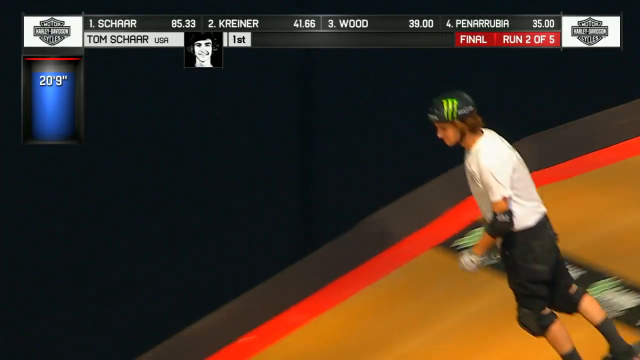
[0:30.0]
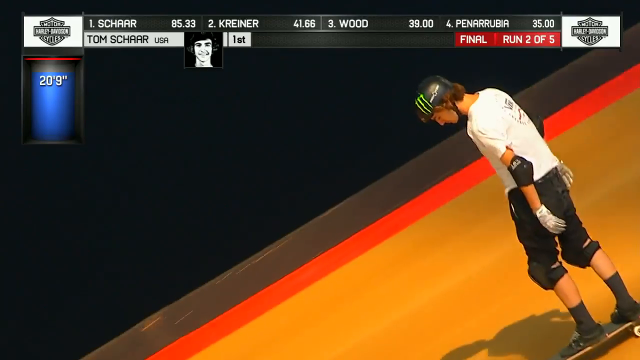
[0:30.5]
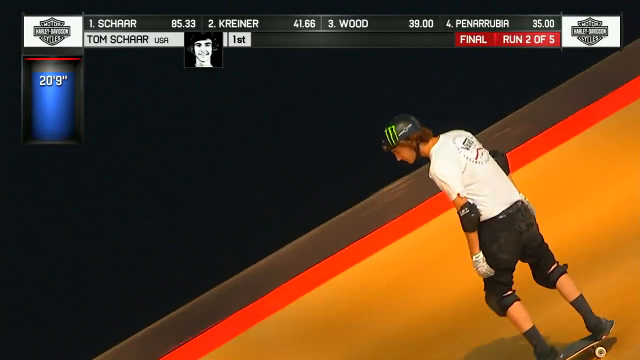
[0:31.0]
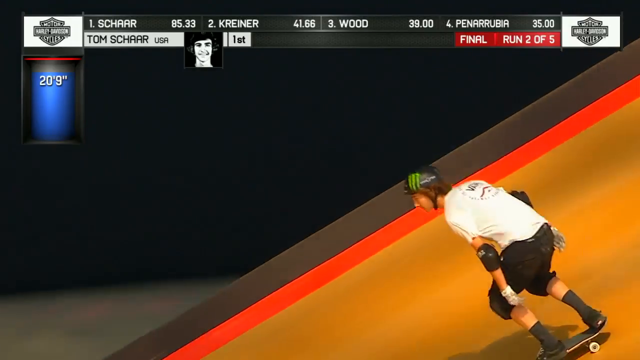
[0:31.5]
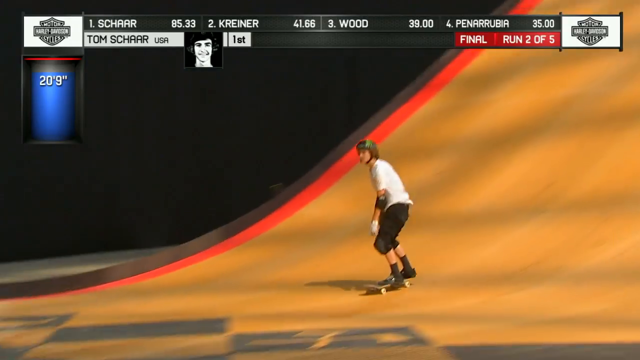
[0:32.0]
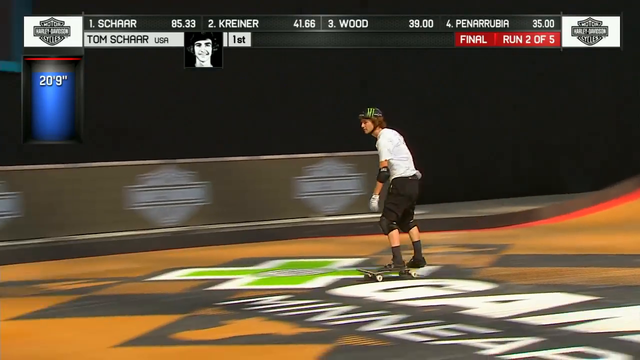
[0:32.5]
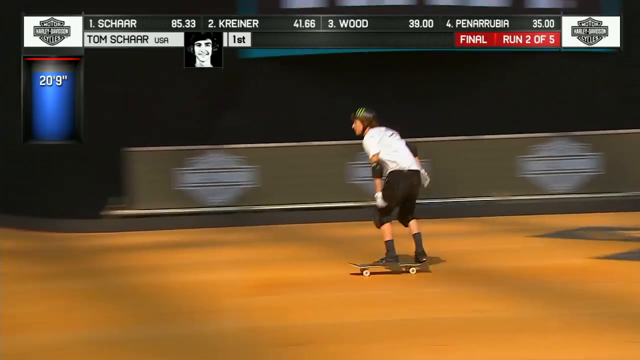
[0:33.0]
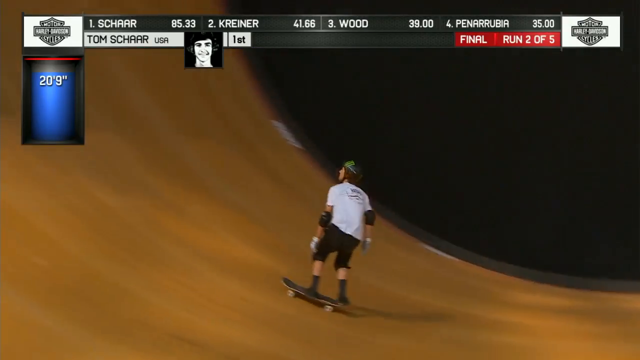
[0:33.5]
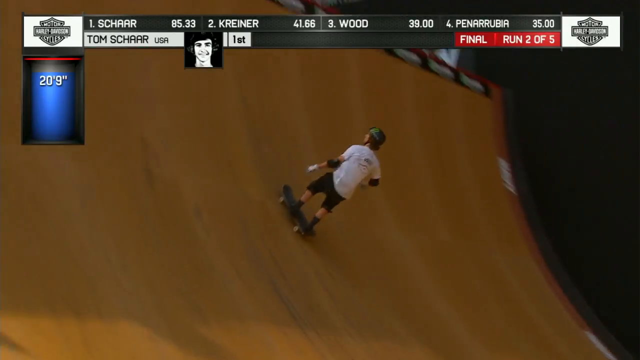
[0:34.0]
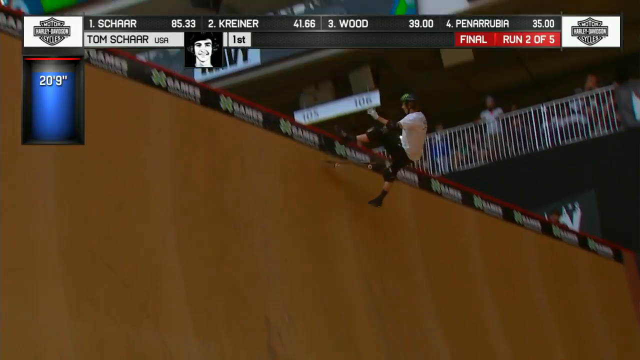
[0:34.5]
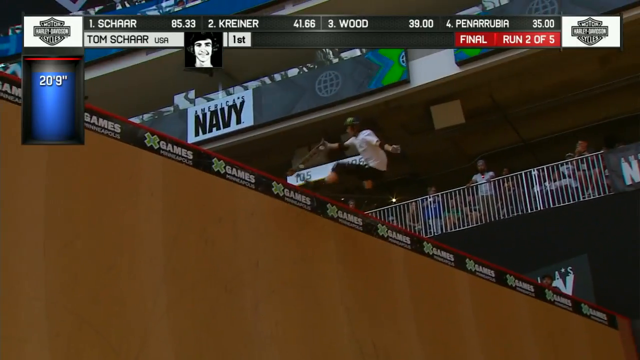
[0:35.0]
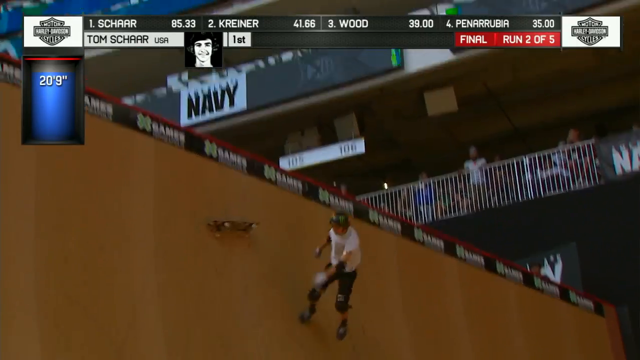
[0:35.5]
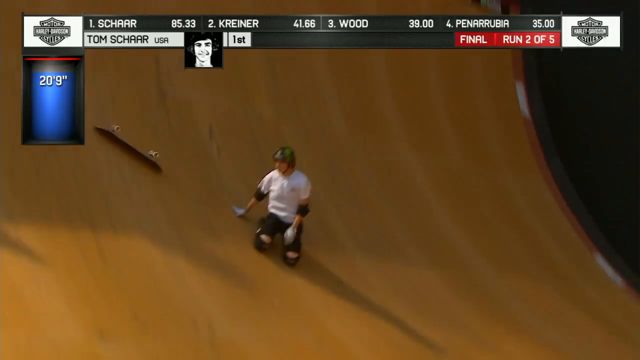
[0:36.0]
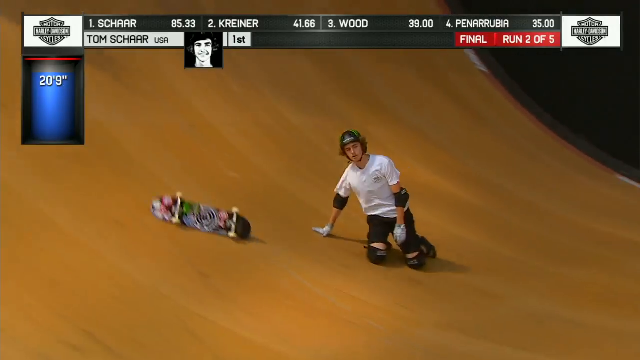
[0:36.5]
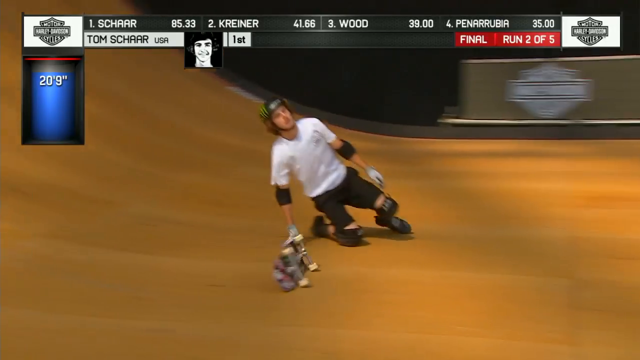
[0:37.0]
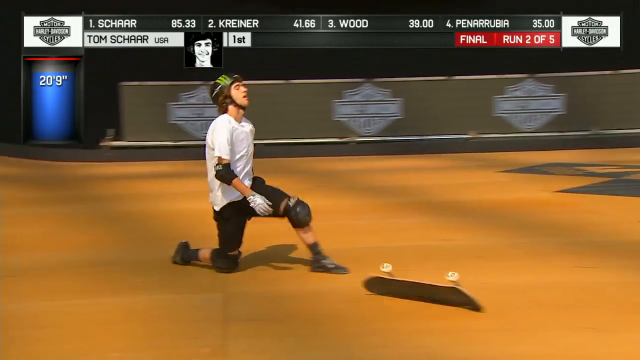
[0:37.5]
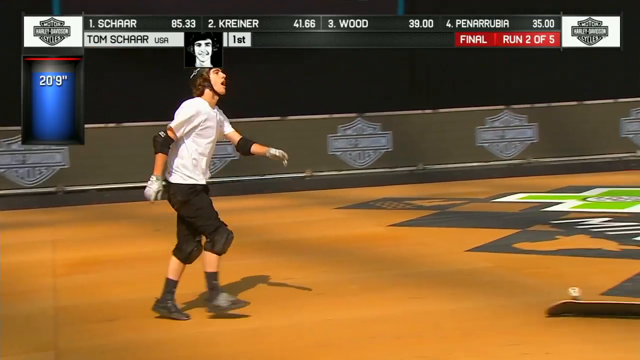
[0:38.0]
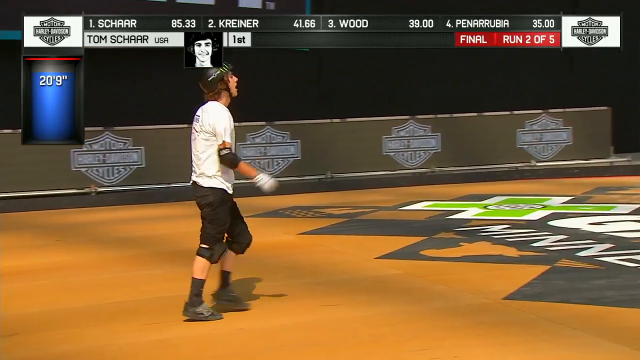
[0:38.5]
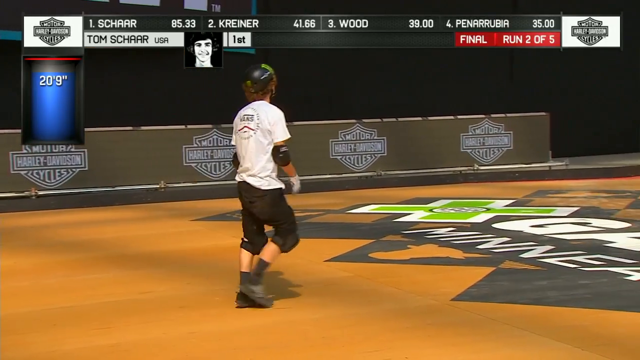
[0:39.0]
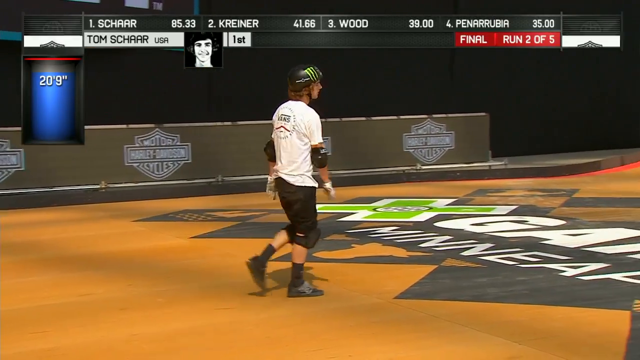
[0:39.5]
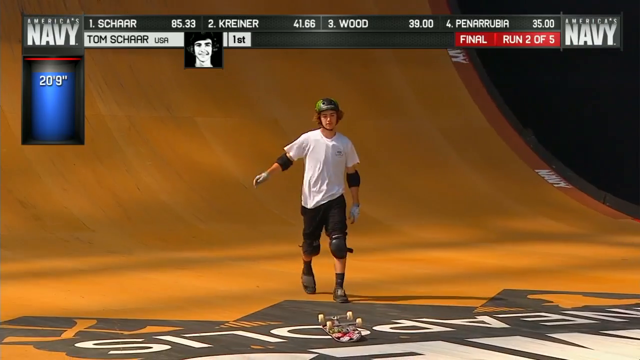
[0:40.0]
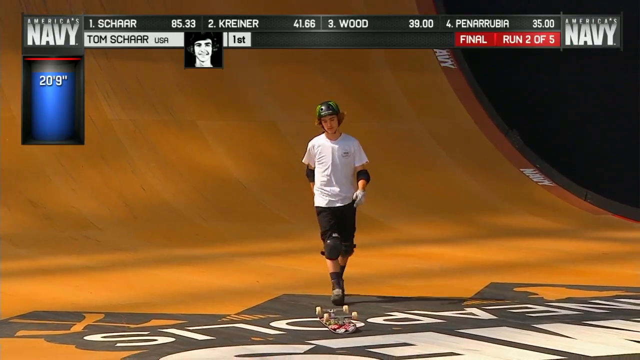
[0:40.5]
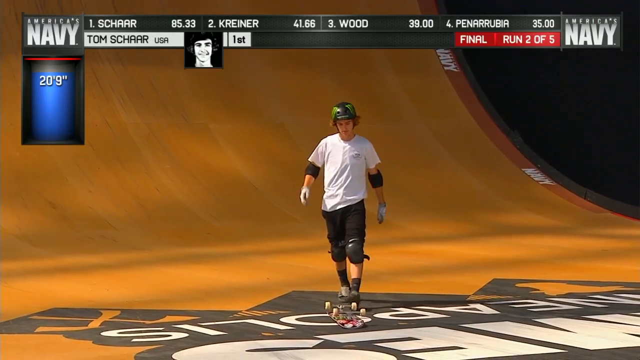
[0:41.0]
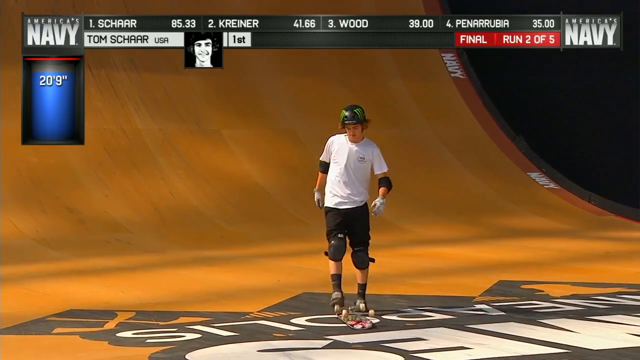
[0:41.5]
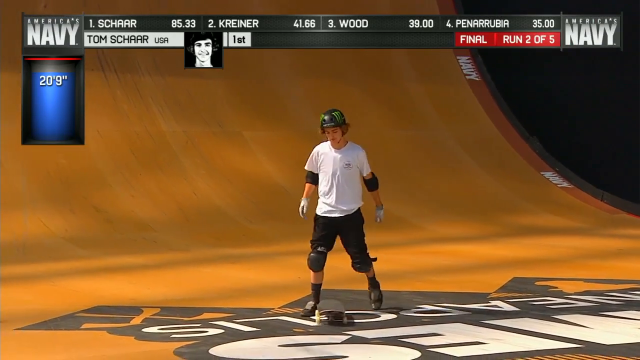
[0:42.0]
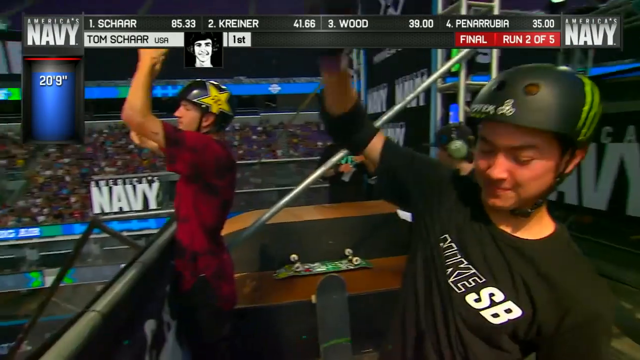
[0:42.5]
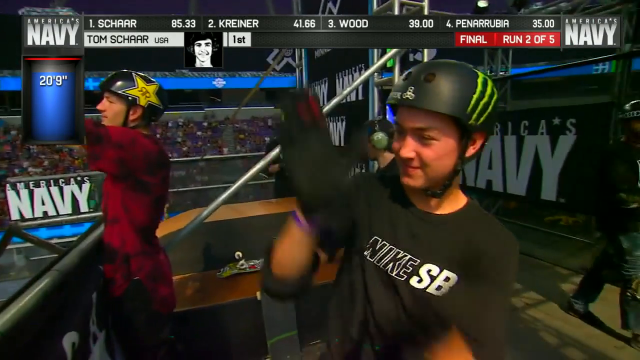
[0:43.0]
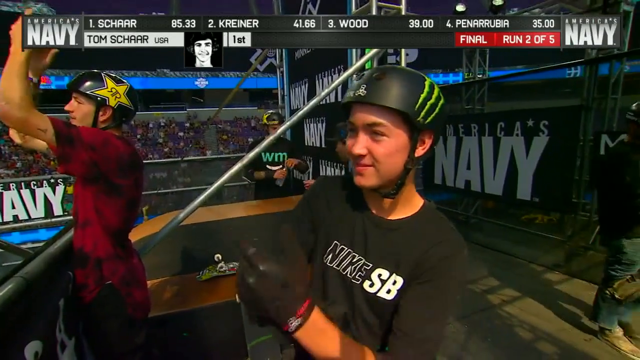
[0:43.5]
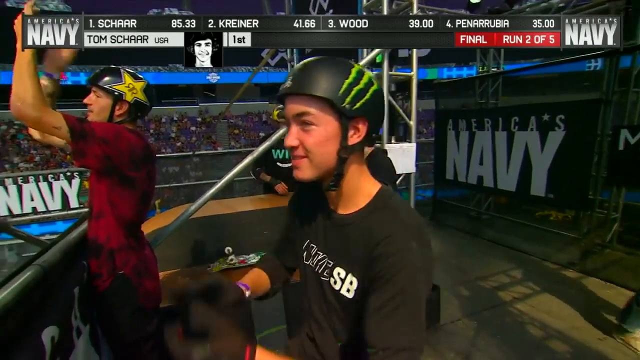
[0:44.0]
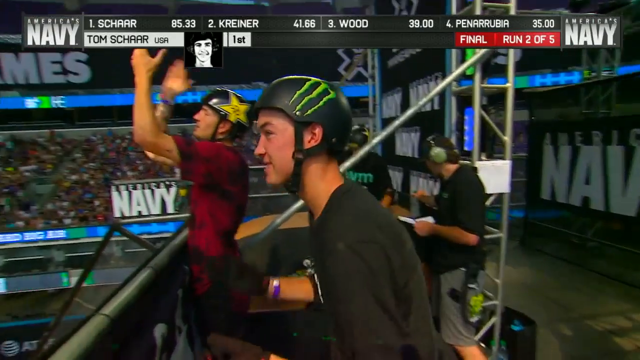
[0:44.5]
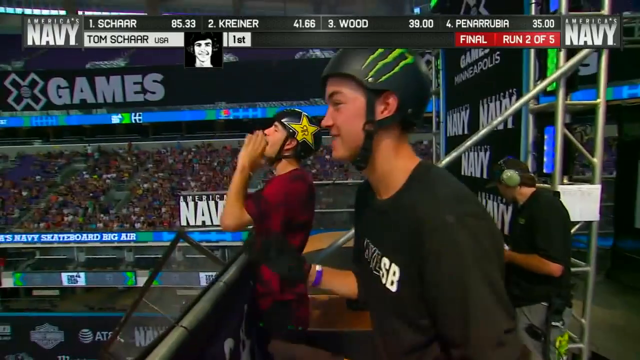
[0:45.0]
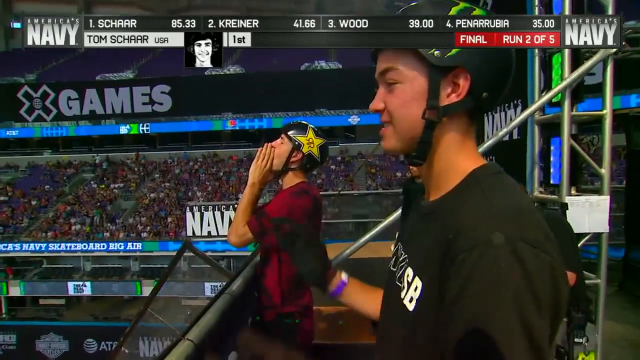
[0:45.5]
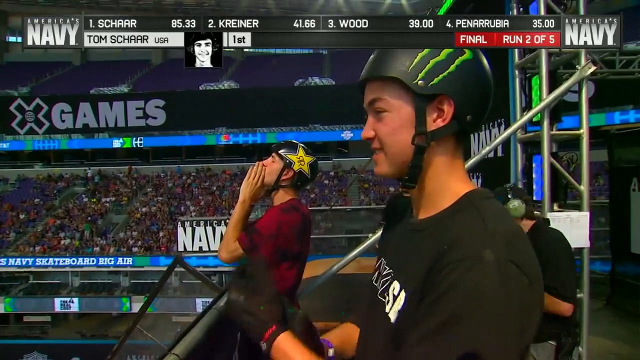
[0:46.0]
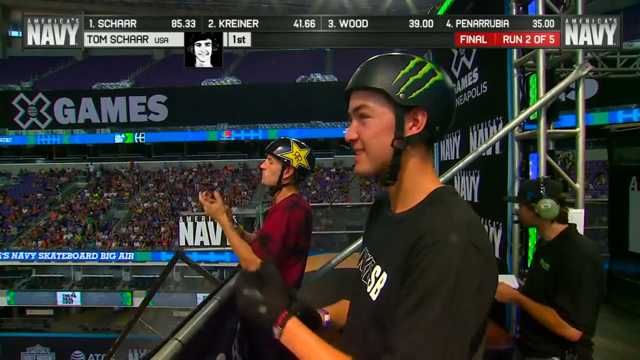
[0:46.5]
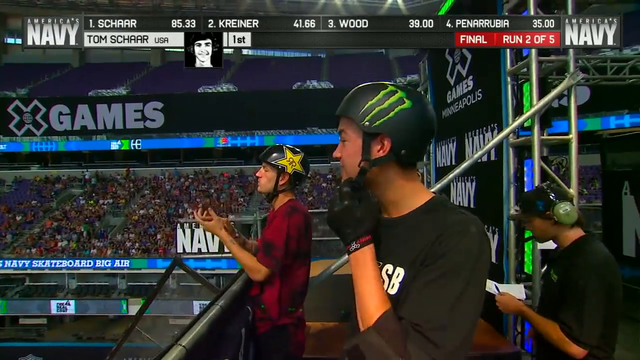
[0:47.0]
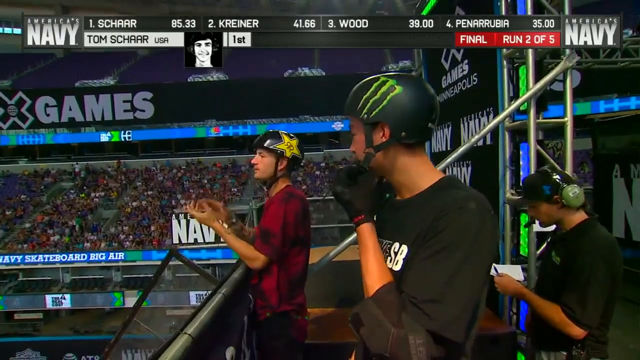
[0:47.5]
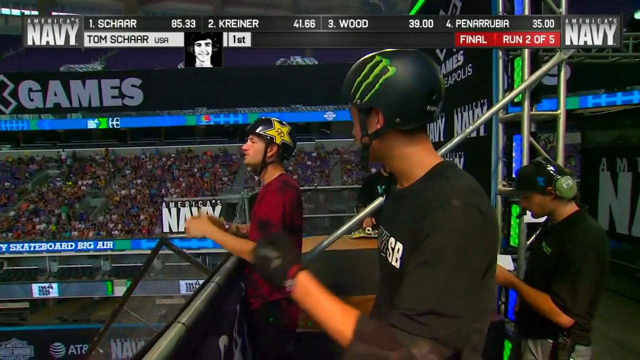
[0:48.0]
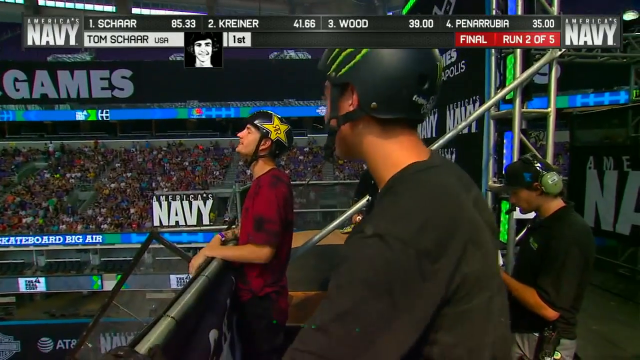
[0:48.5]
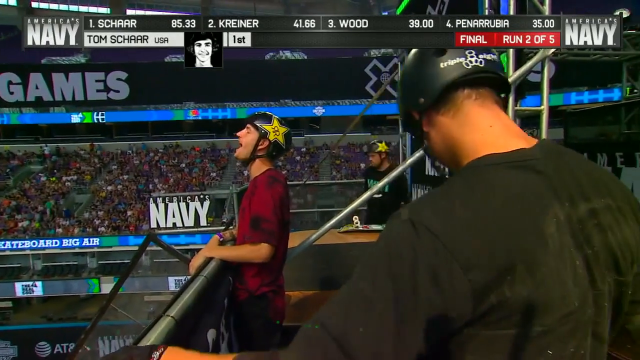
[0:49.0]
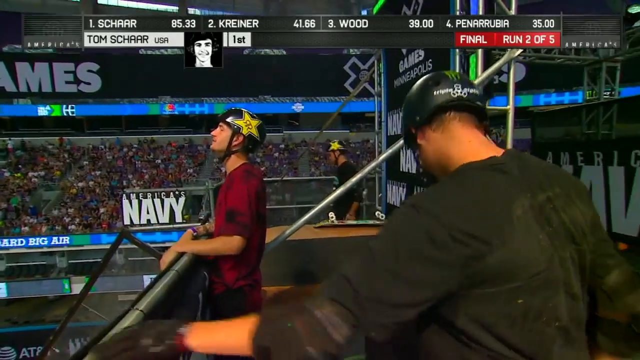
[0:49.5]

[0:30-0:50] Tom is seen skateboarding down the halfpipe and up the other big halfpipe wall. Right near the edge he attempts a kickflip, misses grabbing his board and misses the kickflip. He slides down most of the halfpipe in a graceful manner, unfazed and nonchalant; the miss looks almost deliberate. From the point he misses, he glides down on both knees to the bottom of the halfpipe. The halfpipe is made of a light-colored wood with red edges and a big black logo that reads "X Games Minneapolis," with the X in green and "Games Minneapolis" in white. Tom's skateboard skids off to the right; he walks off dejectedly and kicks it over. The video cuts to two skateboarders at the top of the halfpipe: an Asian man in a black t-shirt with "Nike SB" on the front and a black helmet with a Monster Drink logo, and a white man in a red t-shirt and a black helmet with a Rockstar Energy Drink logo. Various support staff in black polo shirts and green ear protectors are clapping and yelling down the halfpipe.